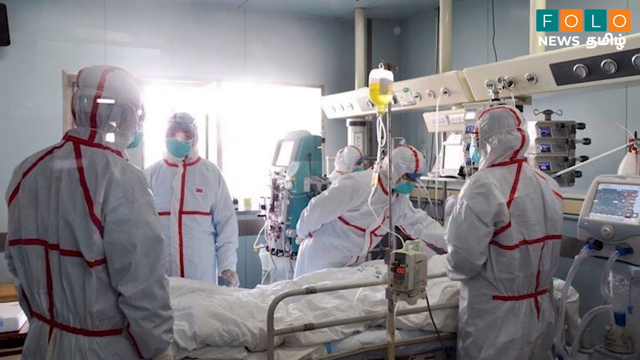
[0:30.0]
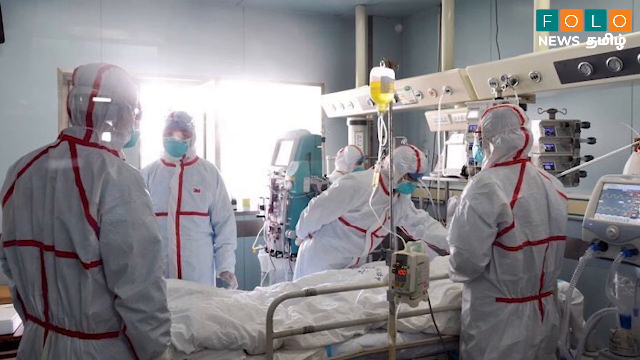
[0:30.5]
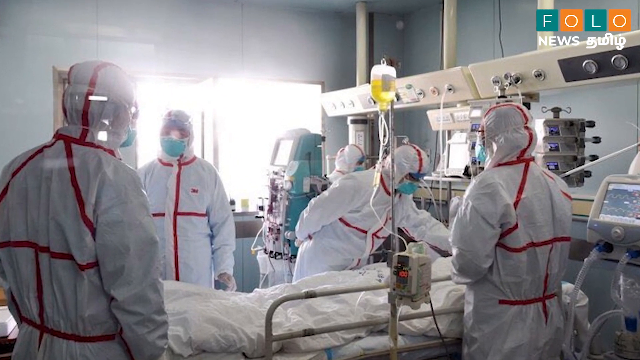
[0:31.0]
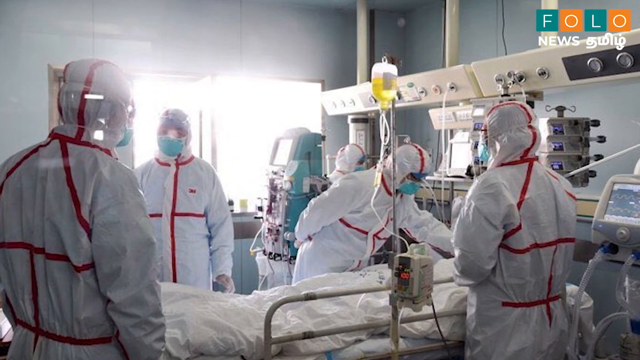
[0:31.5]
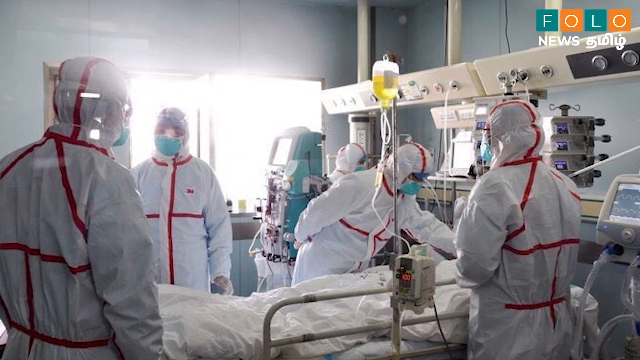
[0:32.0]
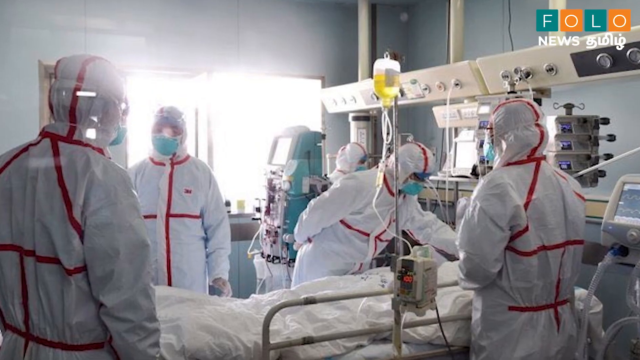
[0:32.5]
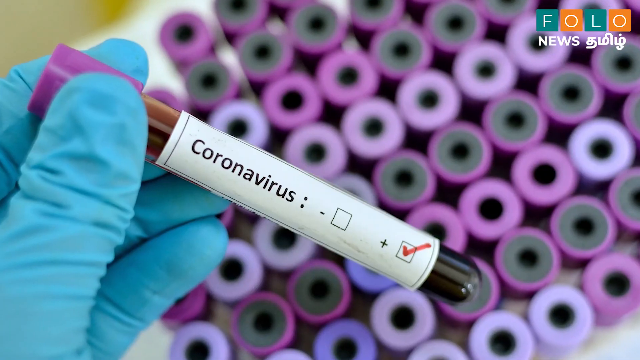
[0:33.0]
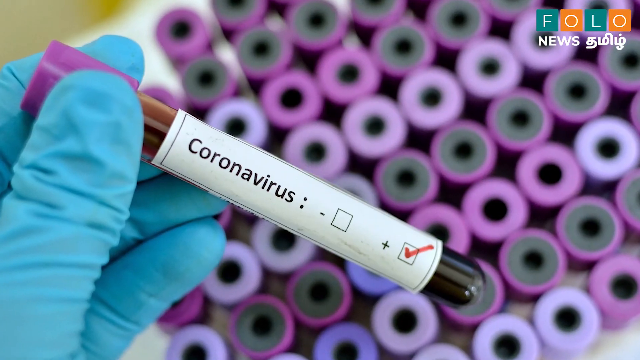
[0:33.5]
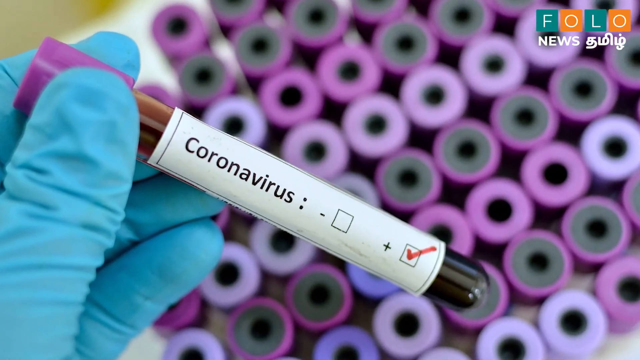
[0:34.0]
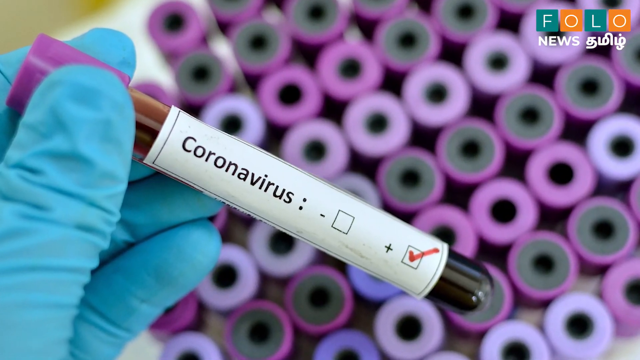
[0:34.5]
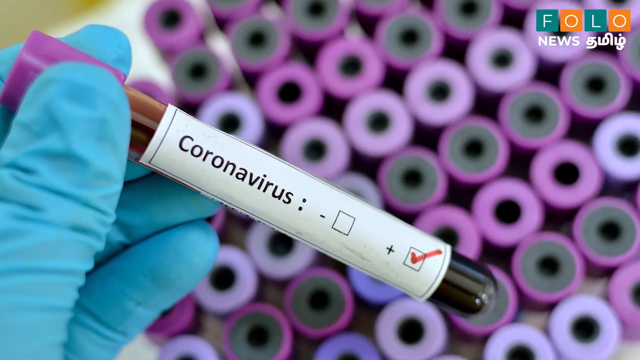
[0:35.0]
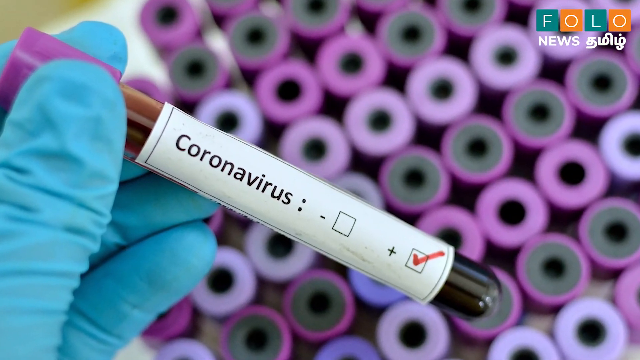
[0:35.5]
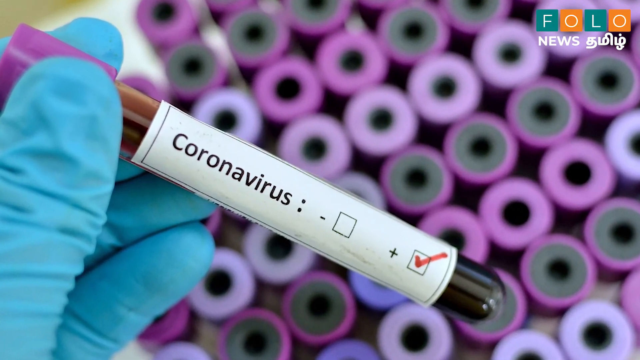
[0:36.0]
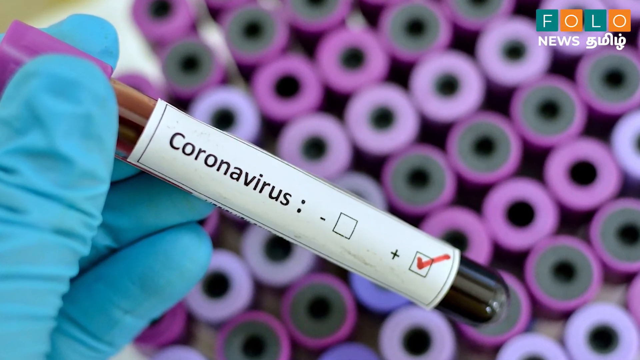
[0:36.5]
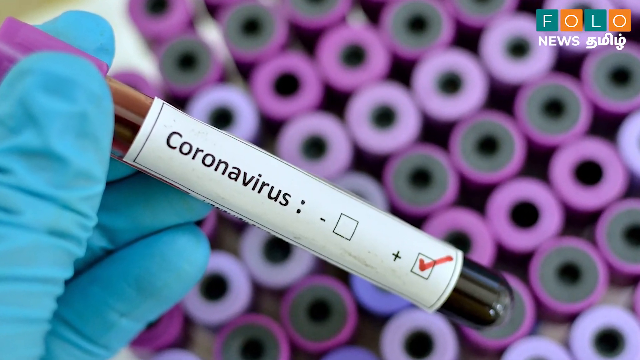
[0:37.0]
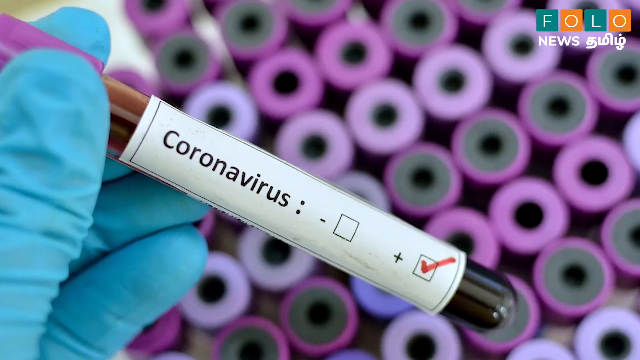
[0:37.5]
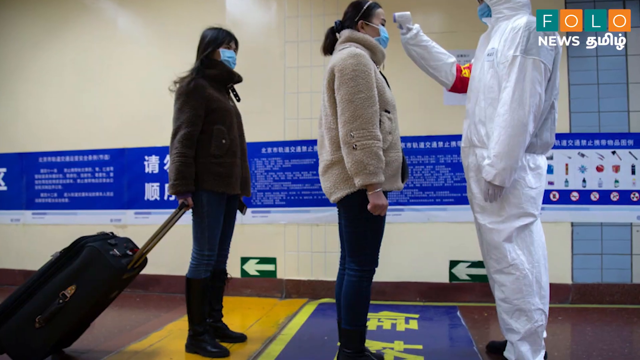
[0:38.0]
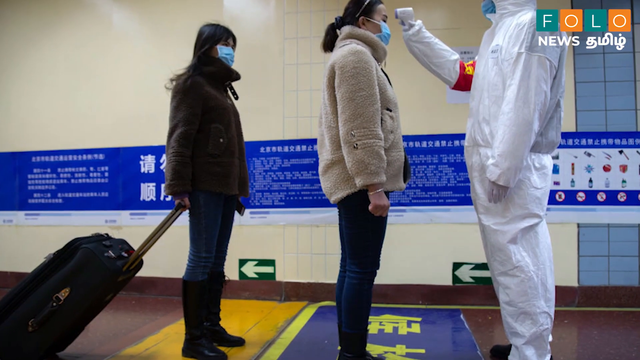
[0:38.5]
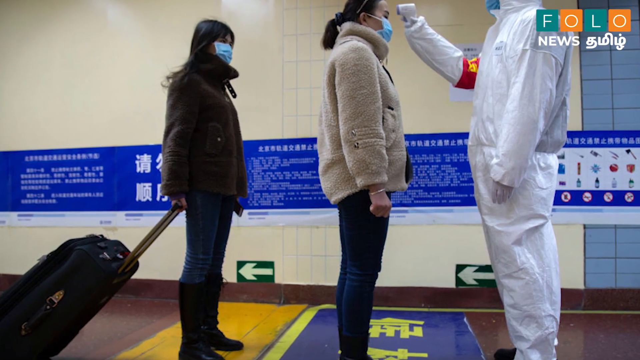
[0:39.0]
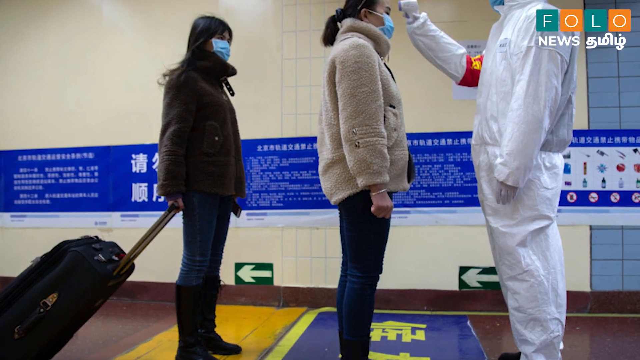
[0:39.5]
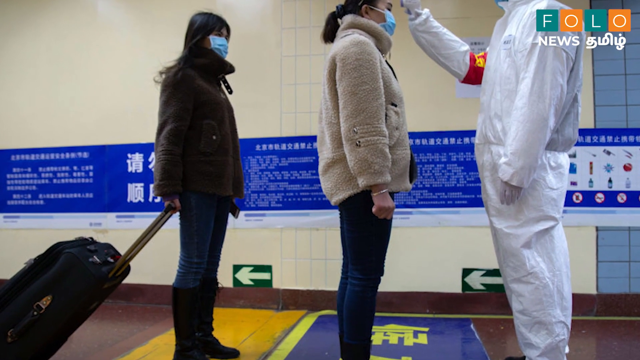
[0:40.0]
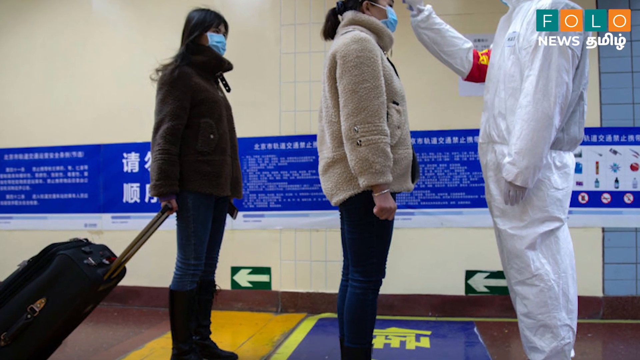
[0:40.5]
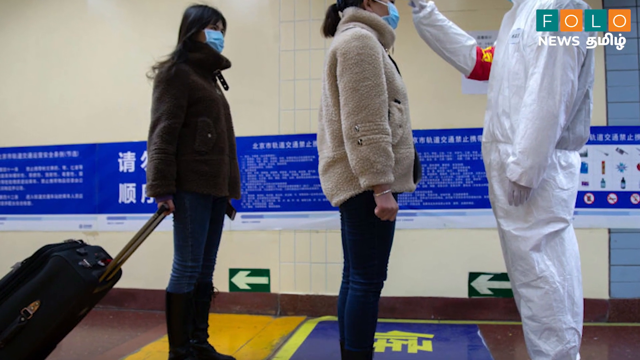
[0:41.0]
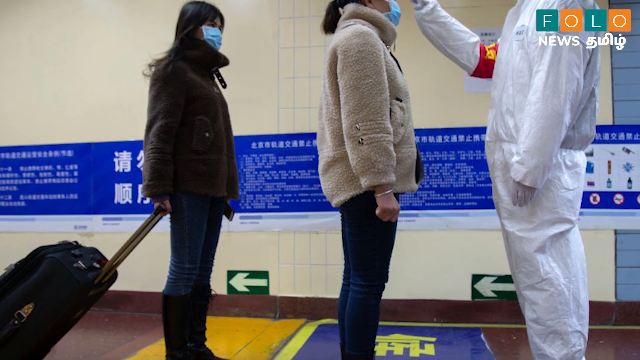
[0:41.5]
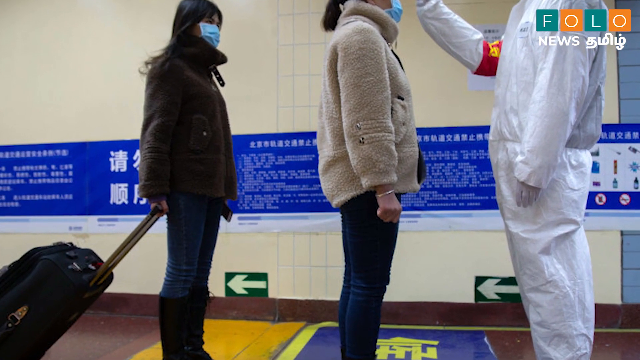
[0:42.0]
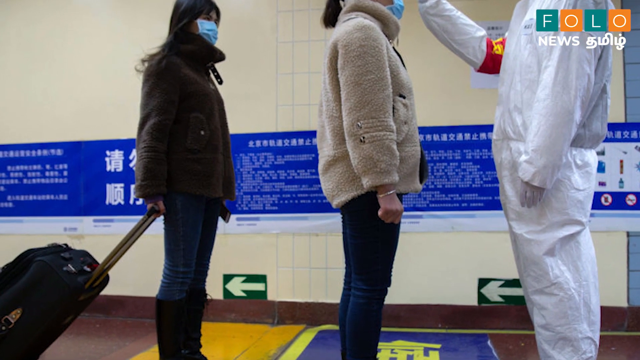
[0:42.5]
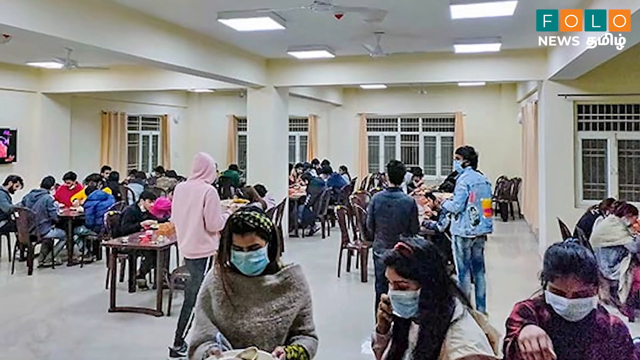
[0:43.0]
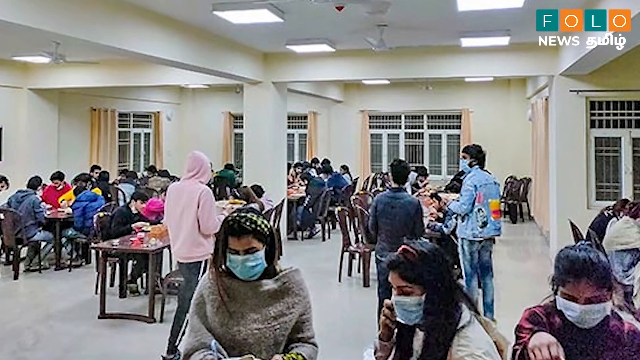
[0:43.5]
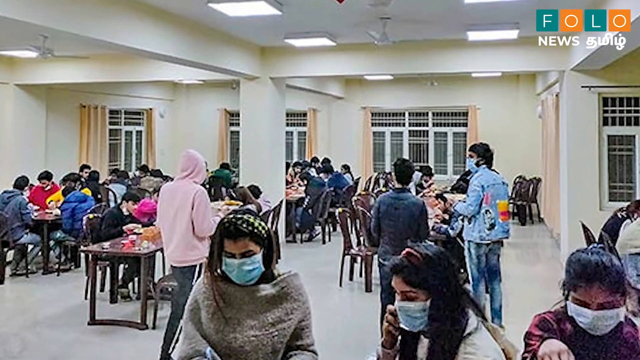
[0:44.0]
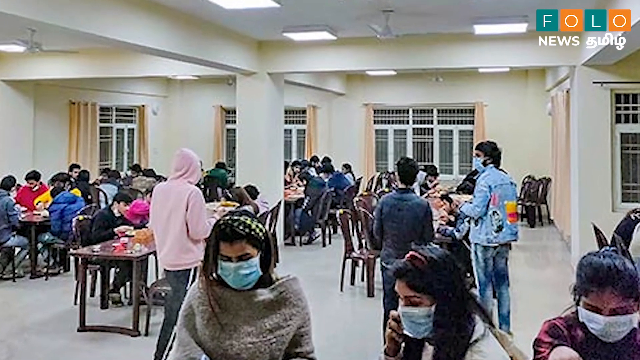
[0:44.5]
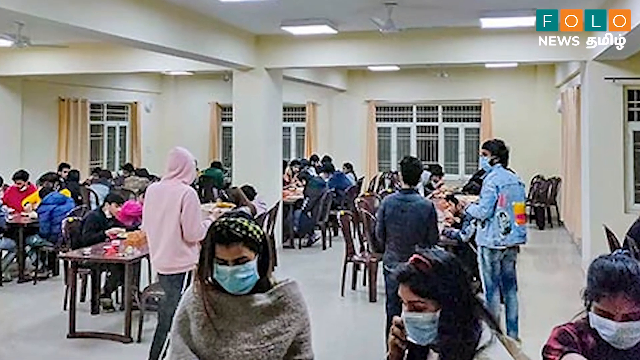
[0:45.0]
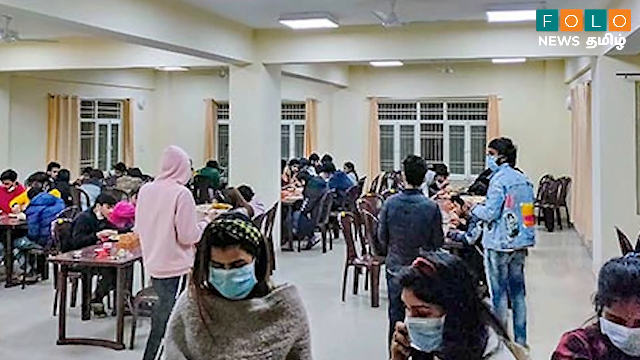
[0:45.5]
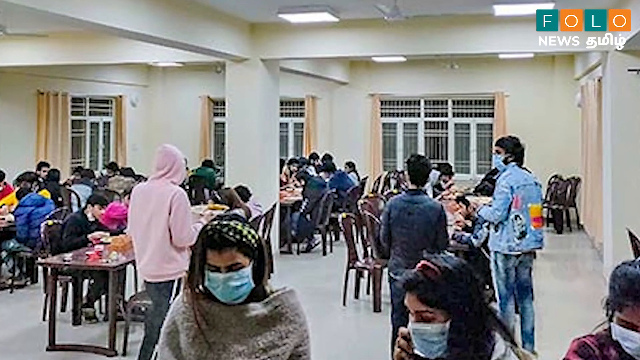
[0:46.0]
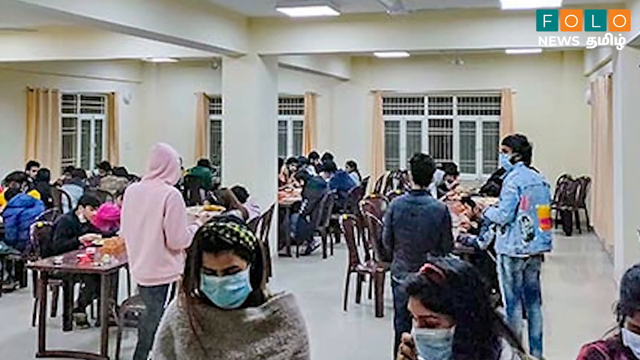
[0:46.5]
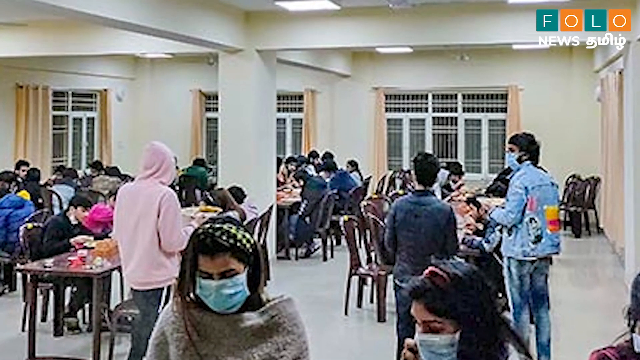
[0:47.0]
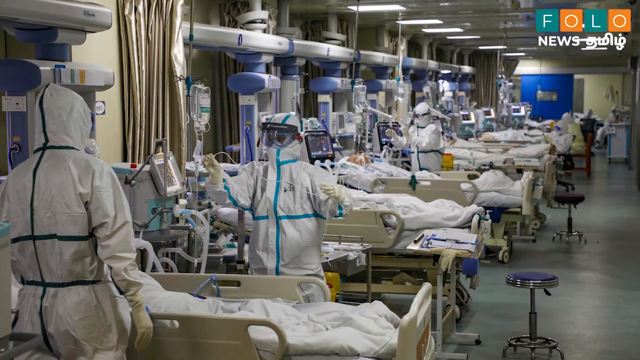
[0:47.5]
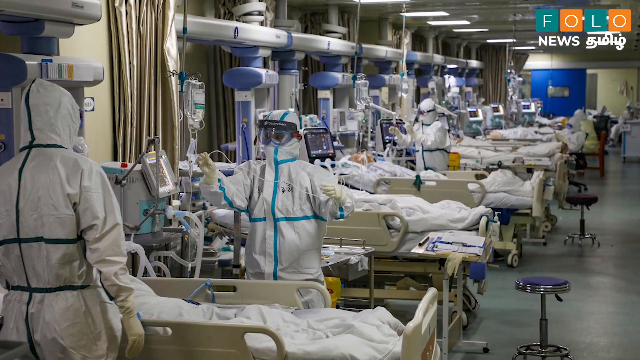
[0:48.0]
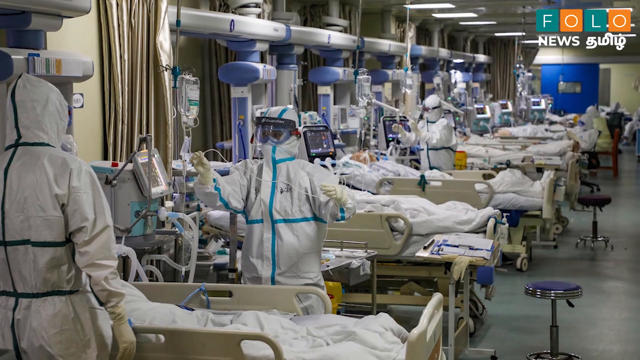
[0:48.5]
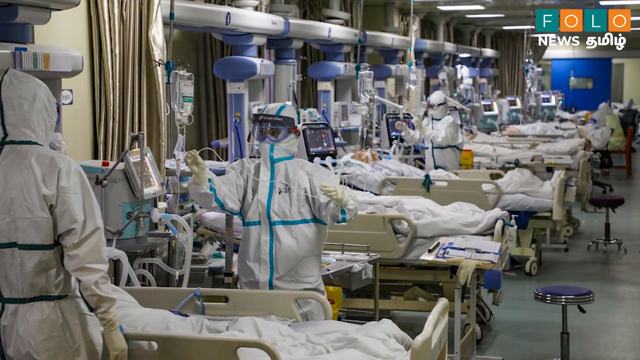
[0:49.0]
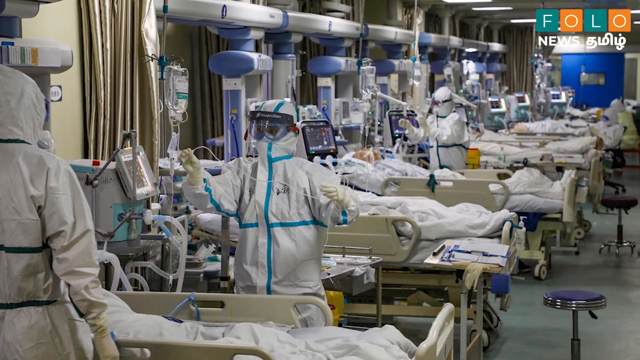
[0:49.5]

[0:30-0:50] The photo shows four healthcare workers in a hospital, all wearing hazmat suits, apparently leaning over a patient lying in bed whose face is blocked by the workers. The patient is hooked up to a lot of machines, and an IV bag filled with a yellow liquid hangs above. The scene cuts to what appears to be blood samples: someone wearing blue surgical gloves holds a tube of blood that reads "coronavirus," with a check mark next to the positive symbol rather than the negative symbol. The blood tubes all have purple caps. Next, a photo shows two people standing in line at an airport while a worker in a hazmat suit with a red and gold armband uses a forehead thermometer to check their temperature. A scene follows of a bunch of people inside a community cafeteria, and then the video cuts back to more pictures of healthcare workers in hazmat suits at the hospital.